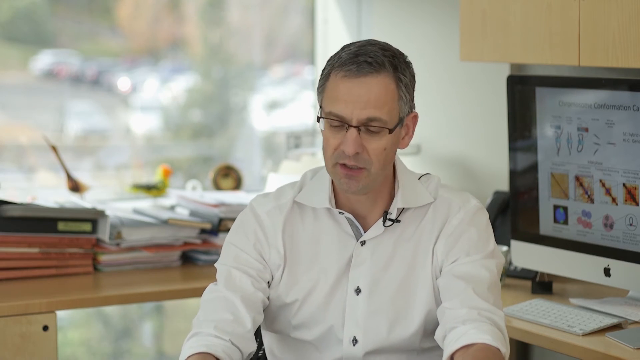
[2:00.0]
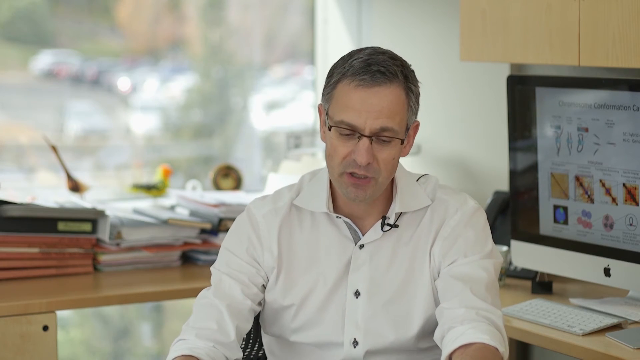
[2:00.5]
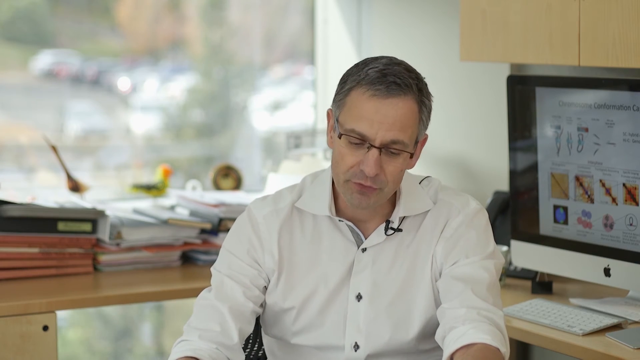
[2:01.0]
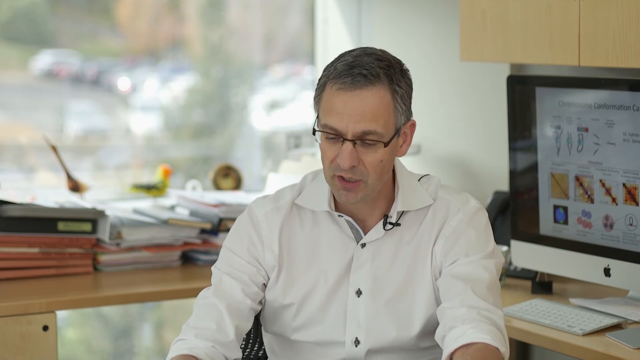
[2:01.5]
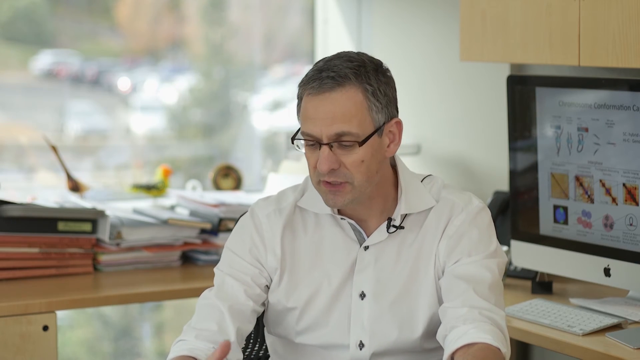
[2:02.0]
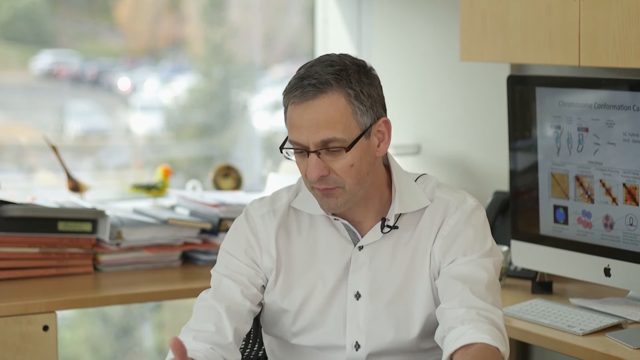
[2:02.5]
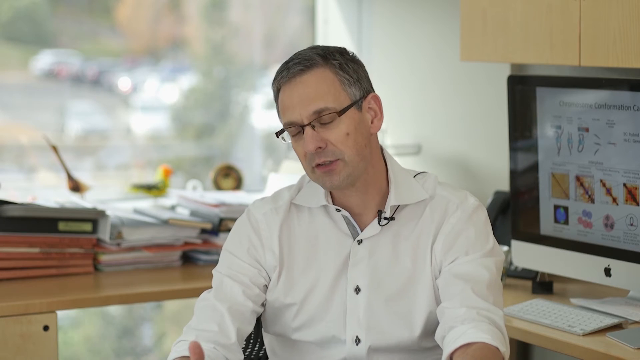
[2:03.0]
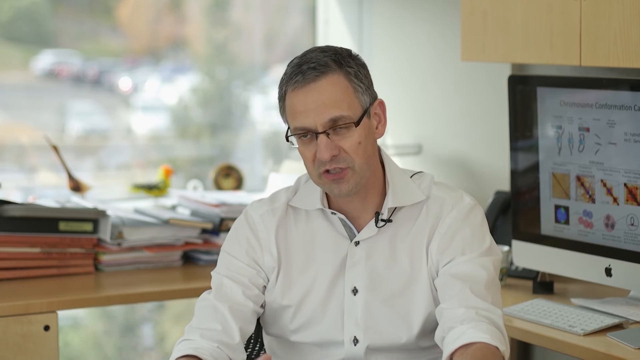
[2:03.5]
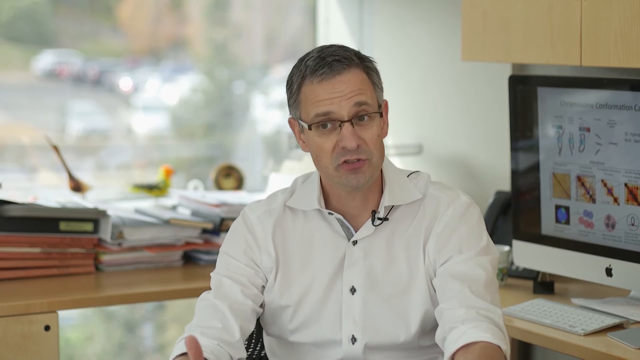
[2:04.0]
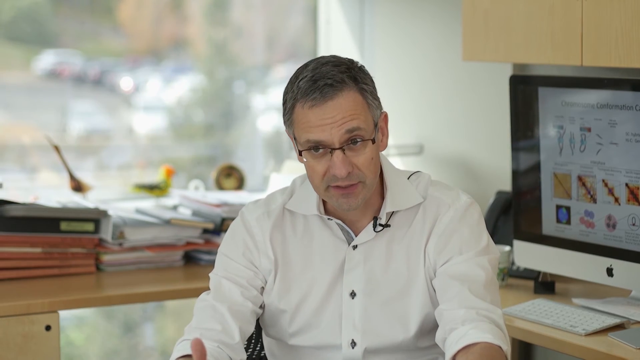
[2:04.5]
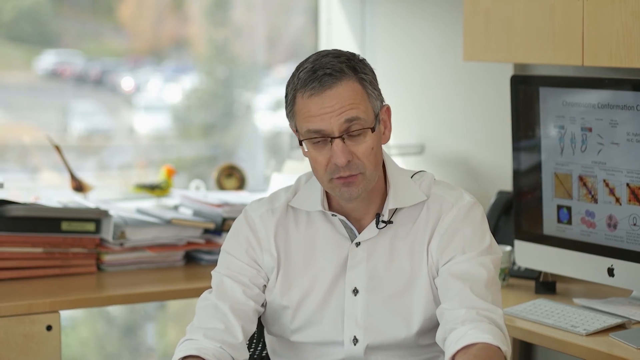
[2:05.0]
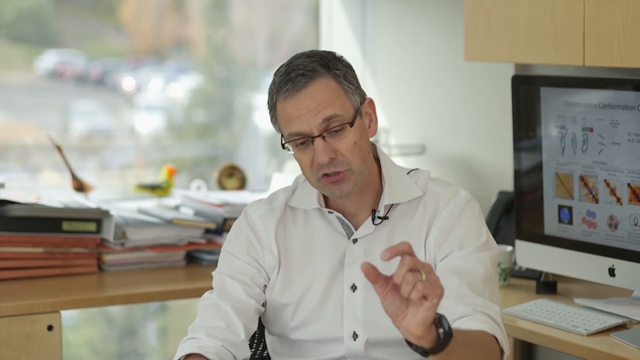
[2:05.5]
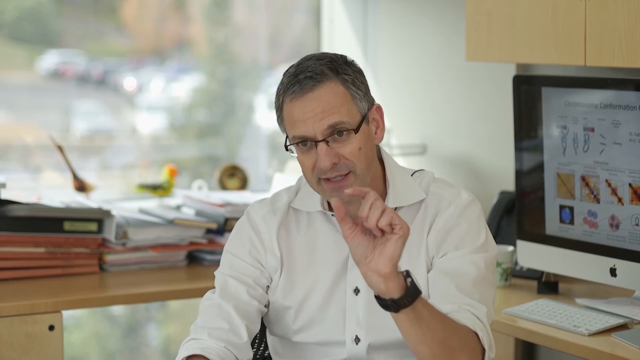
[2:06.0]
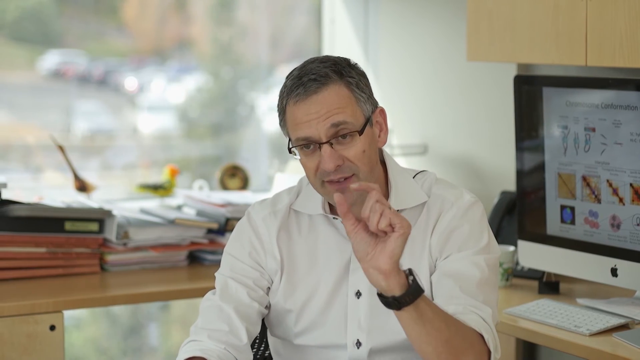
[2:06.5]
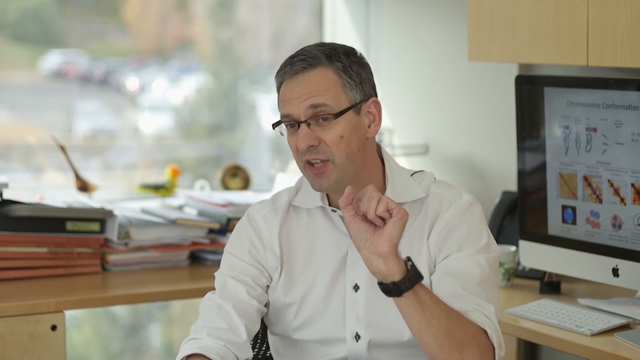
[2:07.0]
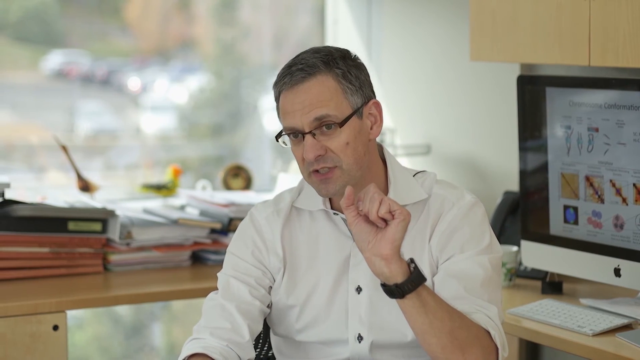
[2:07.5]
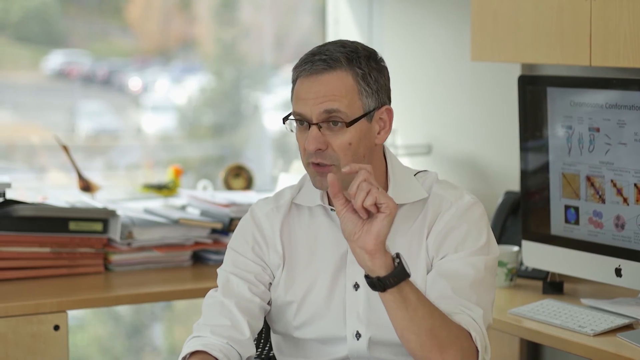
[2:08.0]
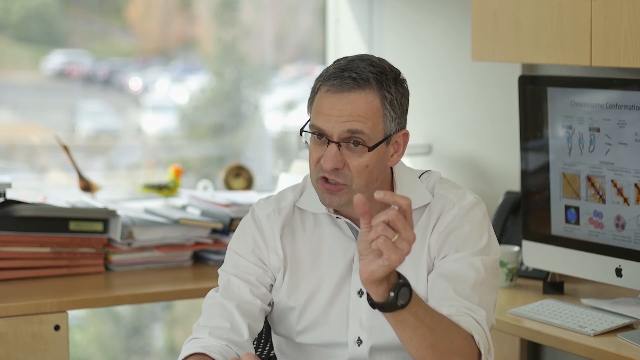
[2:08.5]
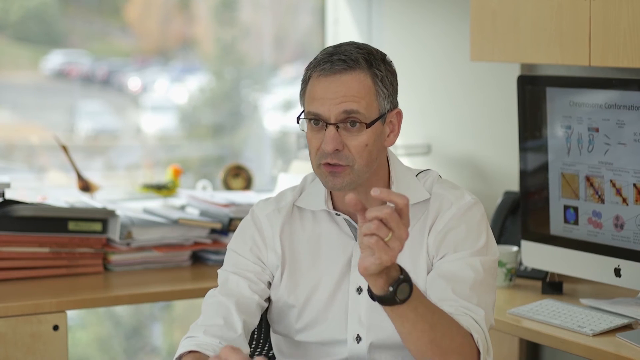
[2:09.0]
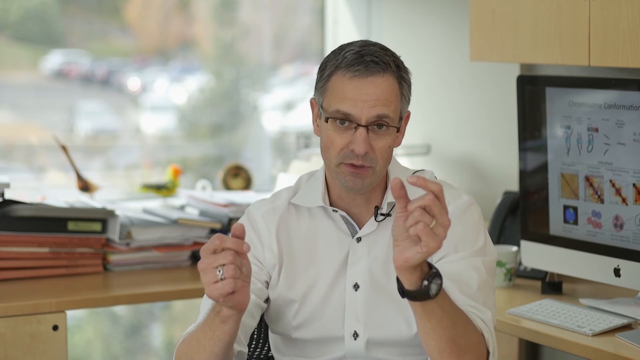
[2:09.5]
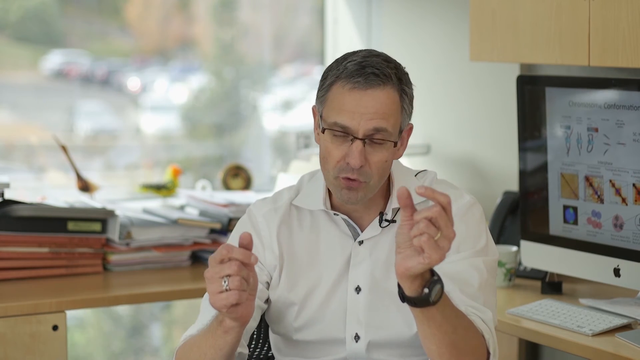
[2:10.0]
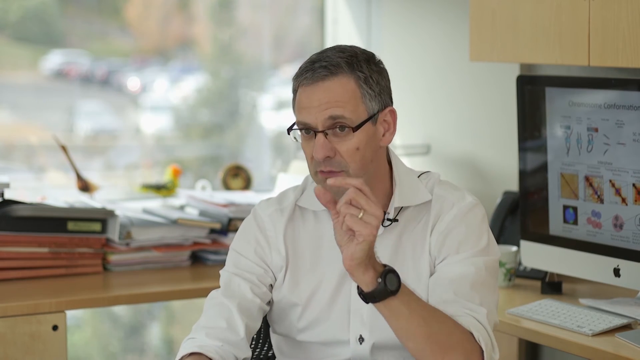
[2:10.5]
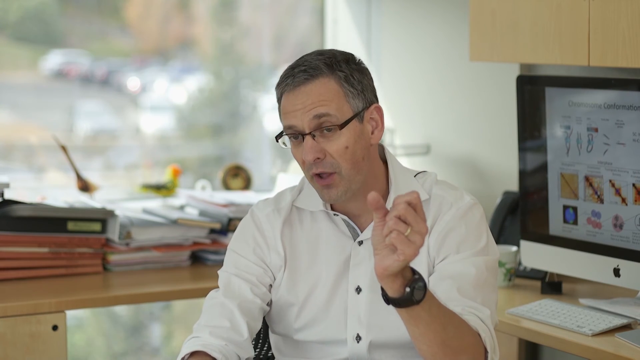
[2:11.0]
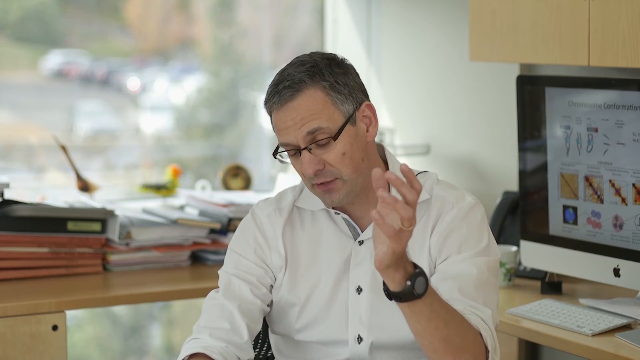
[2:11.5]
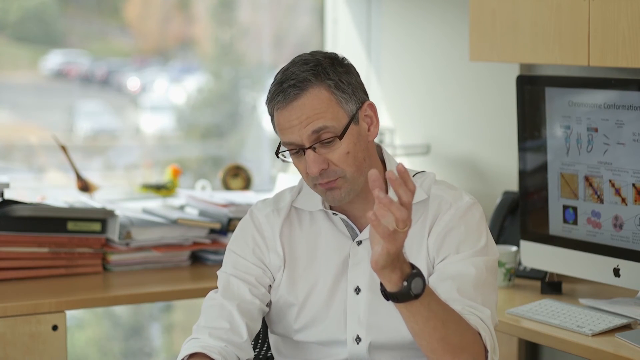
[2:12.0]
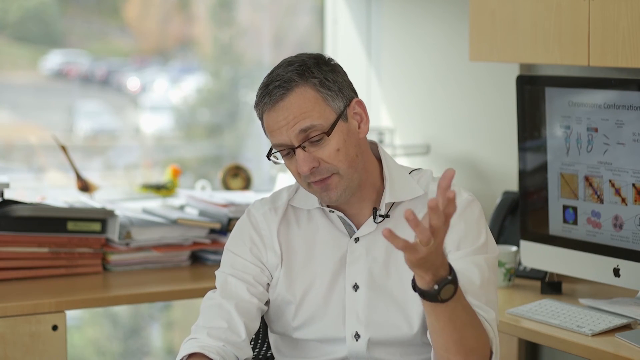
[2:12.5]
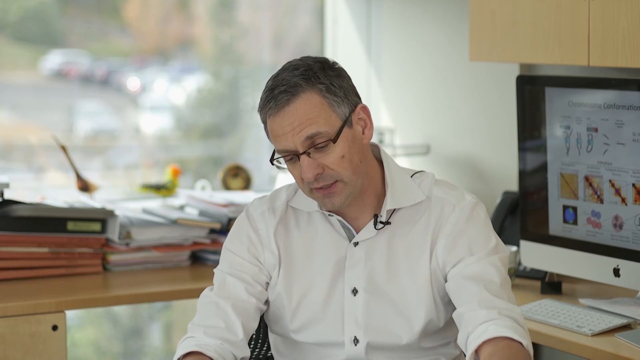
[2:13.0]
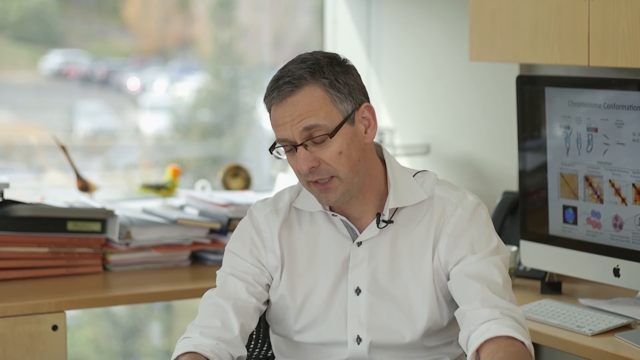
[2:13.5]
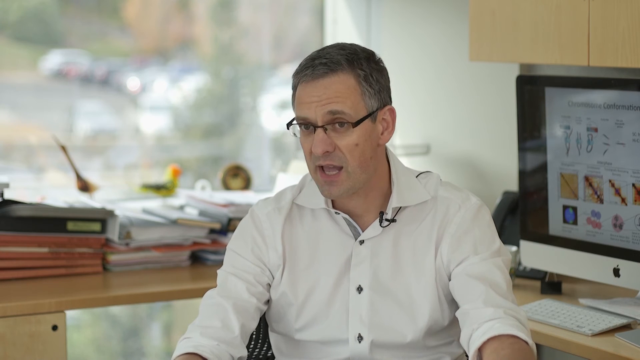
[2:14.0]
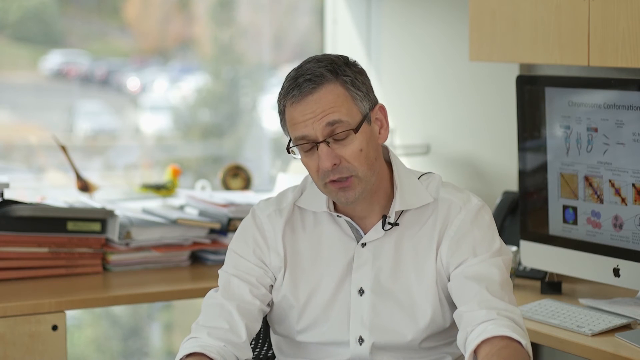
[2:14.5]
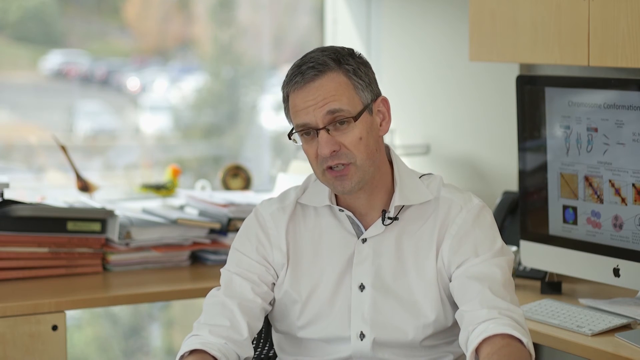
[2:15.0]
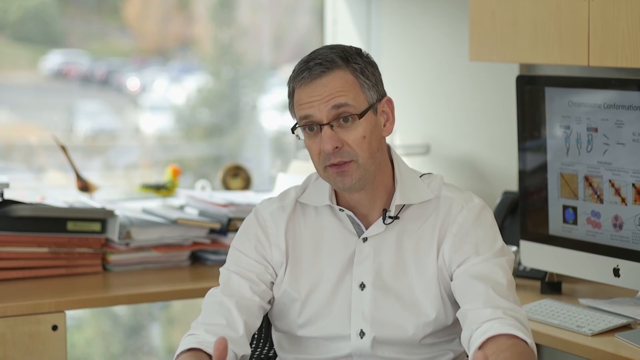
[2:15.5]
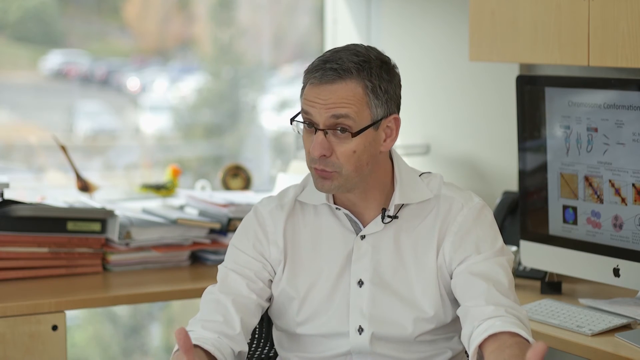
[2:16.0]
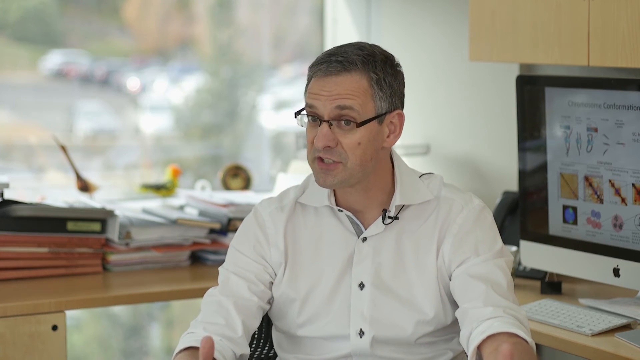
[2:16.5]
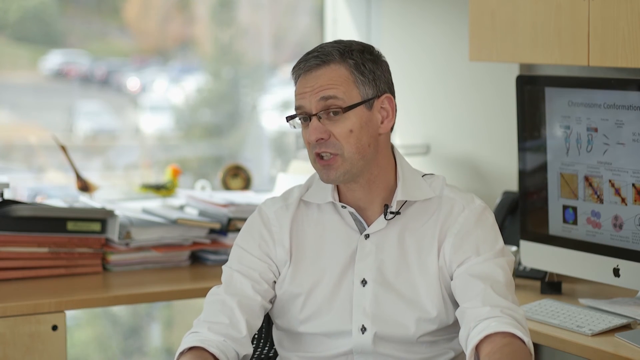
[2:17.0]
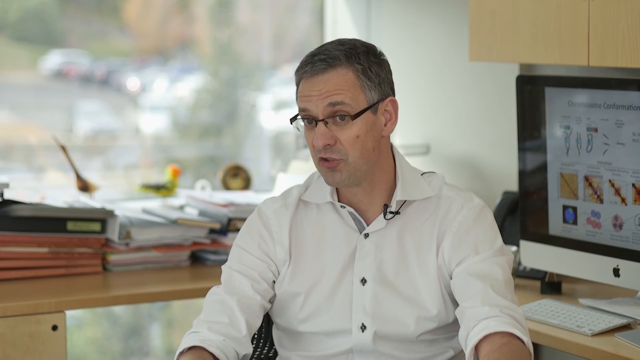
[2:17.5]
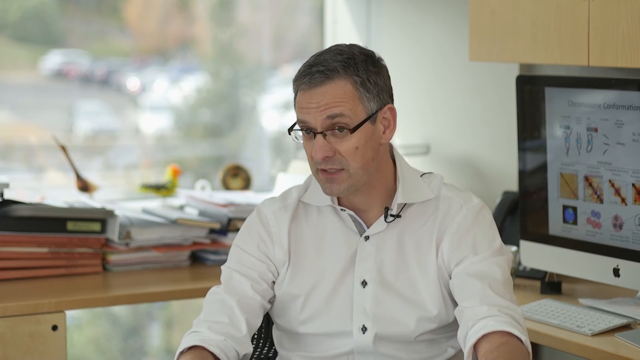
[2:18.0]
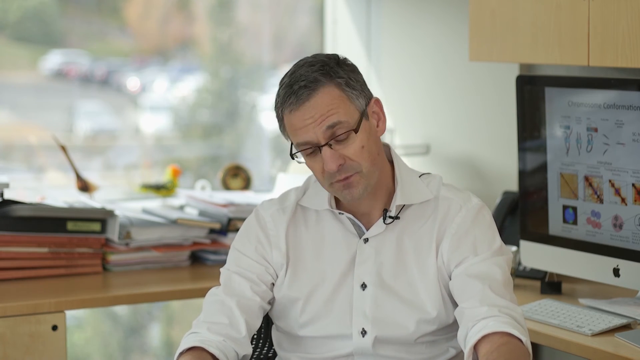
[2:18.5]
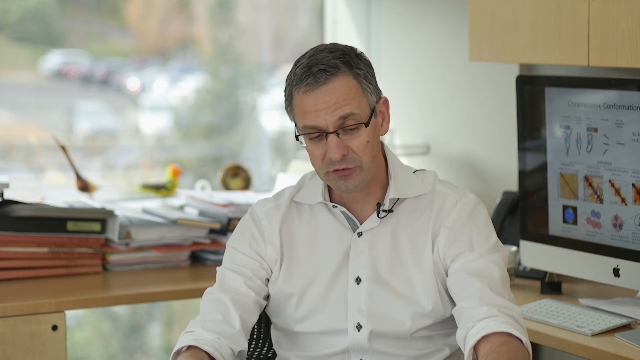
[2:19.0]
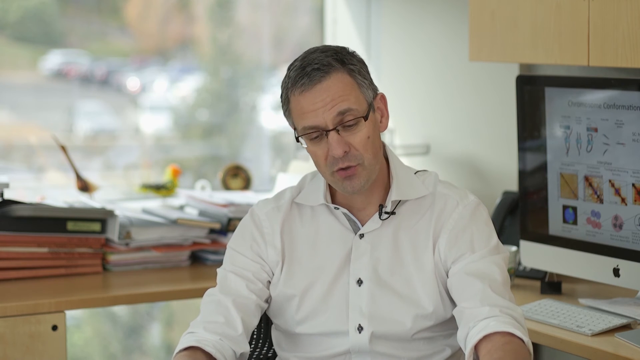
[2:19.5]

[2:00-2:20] The man is sitting at a desk in his office, wearing a white shirt with a black microphone attached to his collar, and glasses. He has brunette hair with a little gray and looks maybe around 50. His computer monitor is next to him, along with a lot of books and notebooks. He is apparently a professor and talks a lot with his hands. No images are shown. A huge window behind him lets sunlight in. His monitor appears to show some type of science material, like cells and atoms.